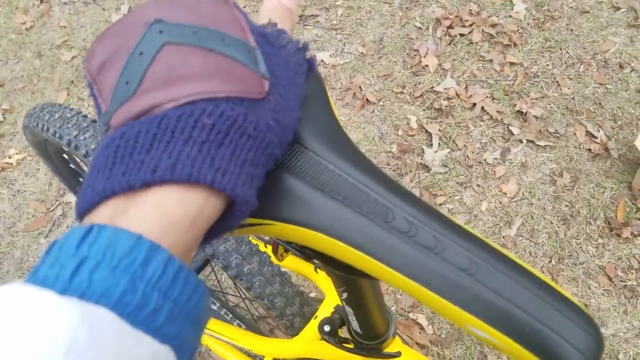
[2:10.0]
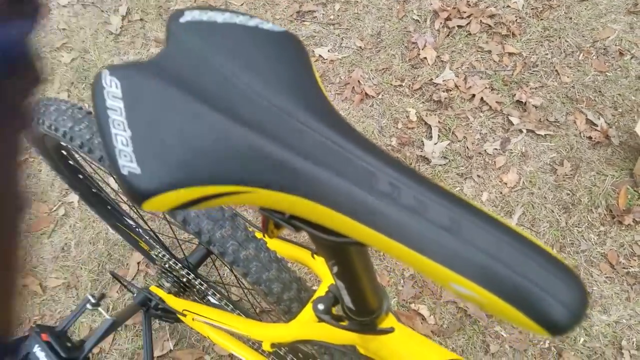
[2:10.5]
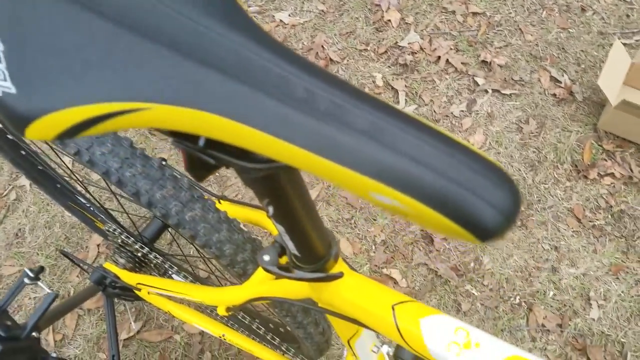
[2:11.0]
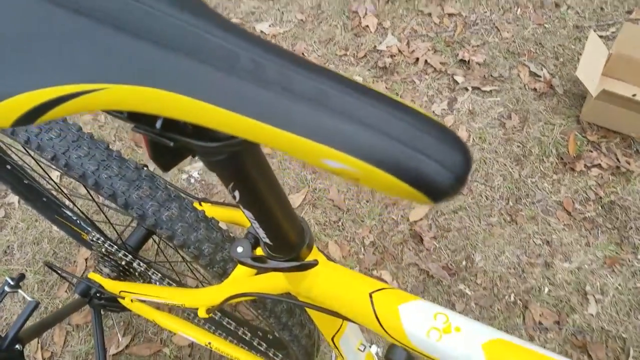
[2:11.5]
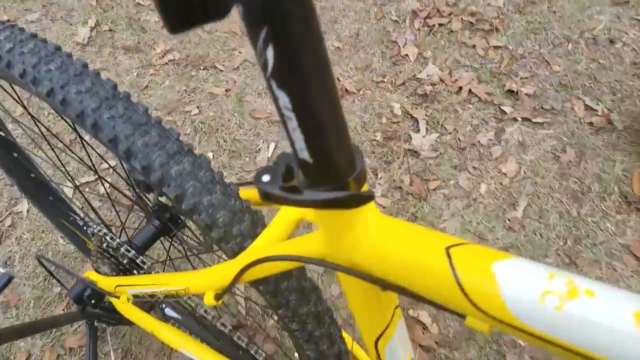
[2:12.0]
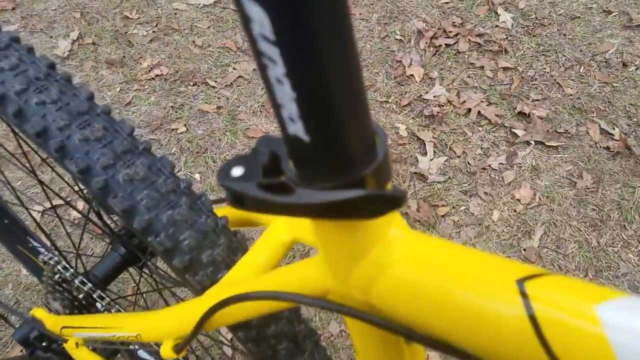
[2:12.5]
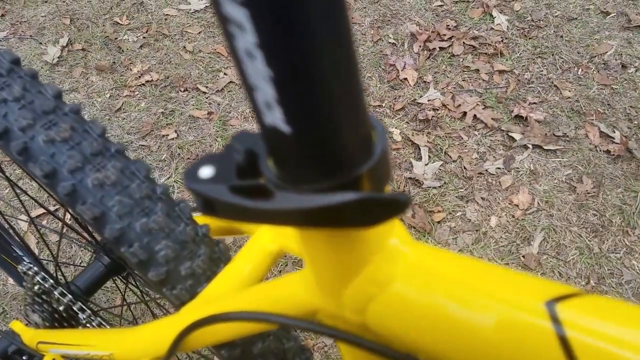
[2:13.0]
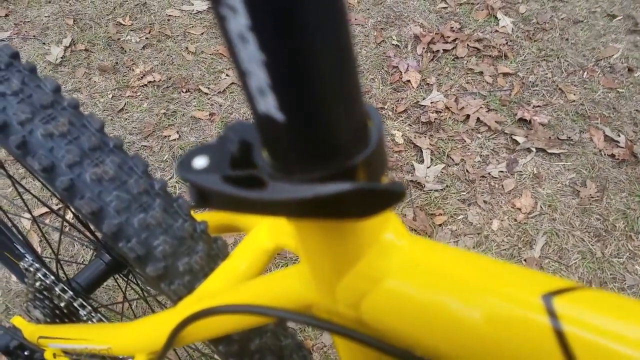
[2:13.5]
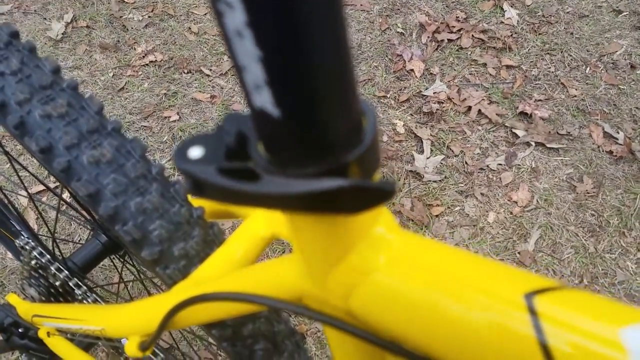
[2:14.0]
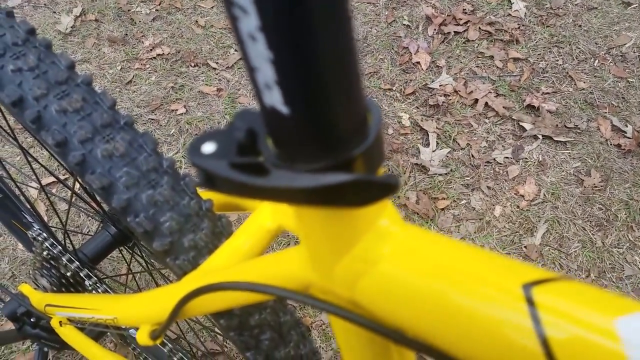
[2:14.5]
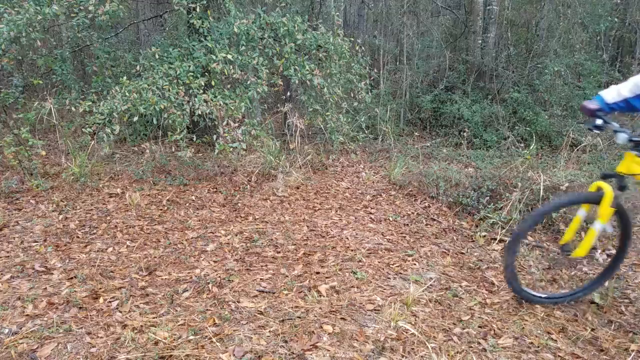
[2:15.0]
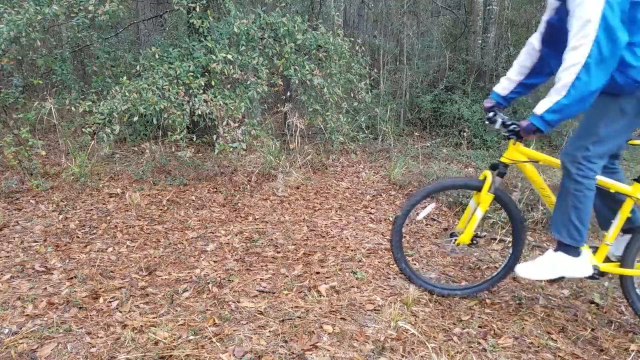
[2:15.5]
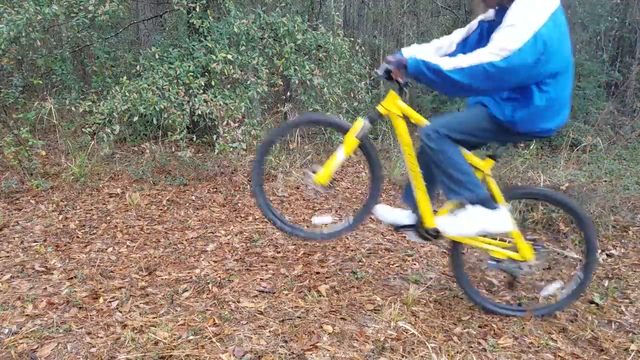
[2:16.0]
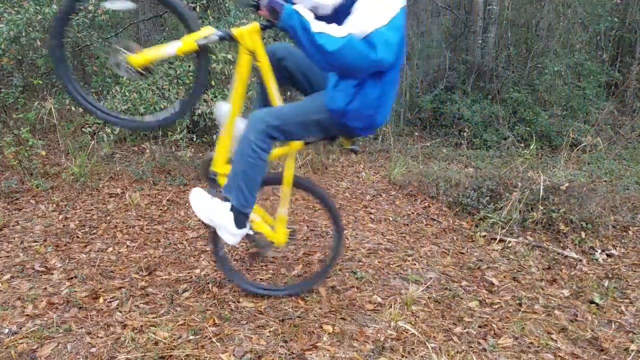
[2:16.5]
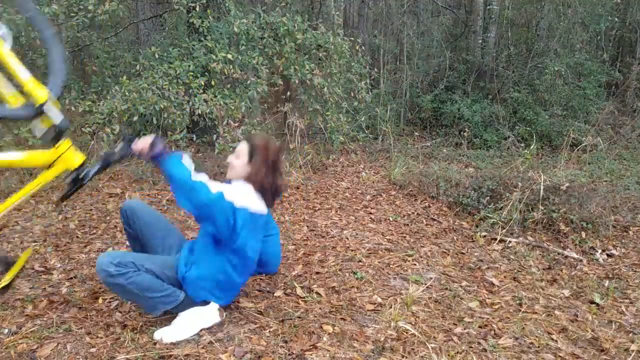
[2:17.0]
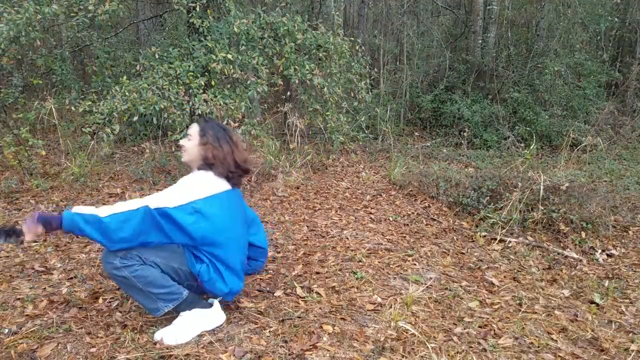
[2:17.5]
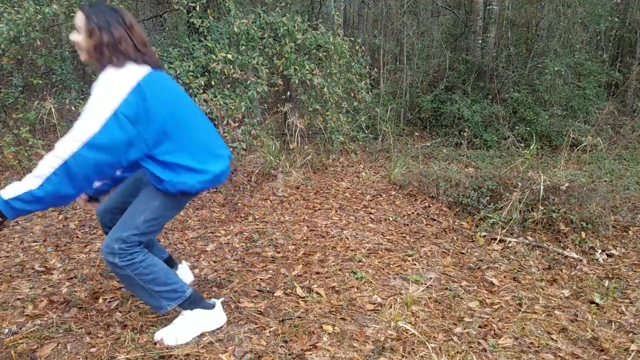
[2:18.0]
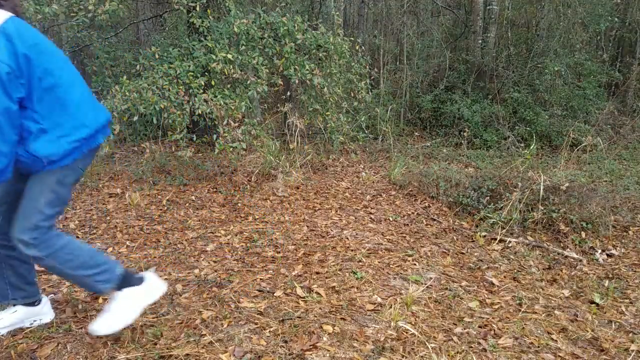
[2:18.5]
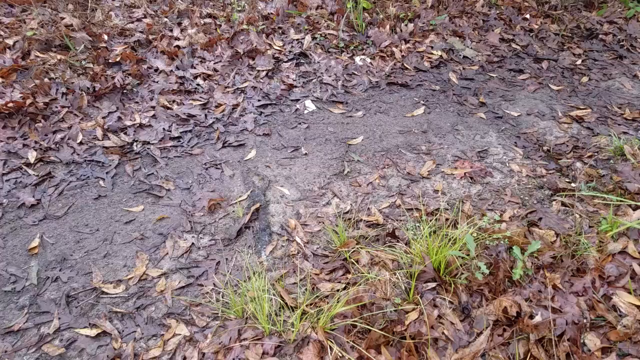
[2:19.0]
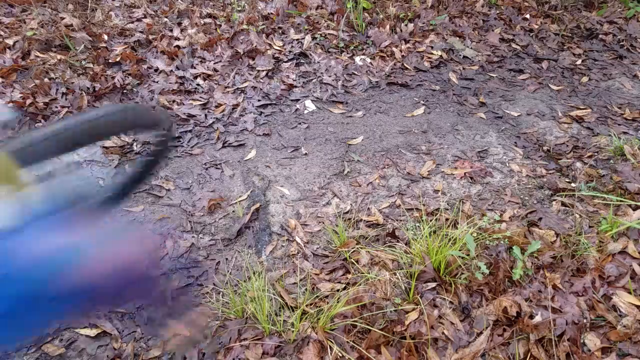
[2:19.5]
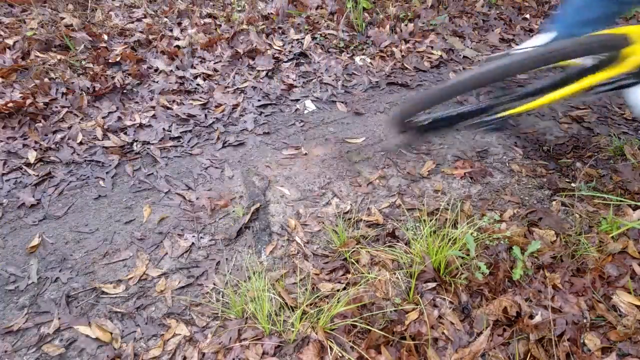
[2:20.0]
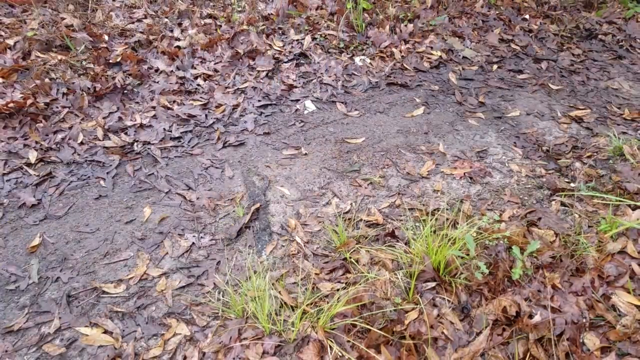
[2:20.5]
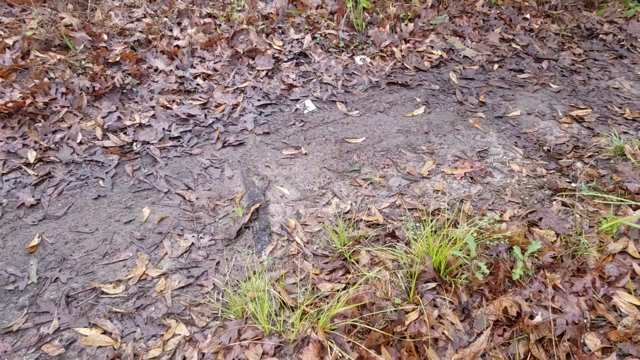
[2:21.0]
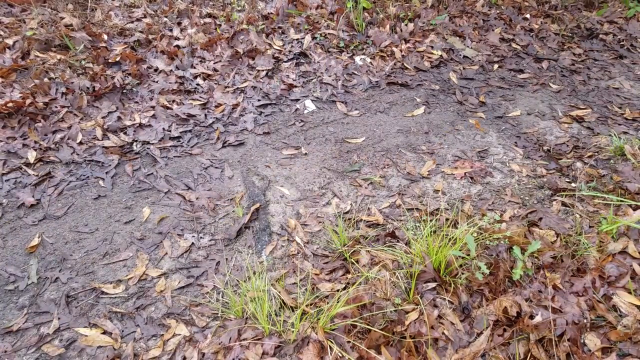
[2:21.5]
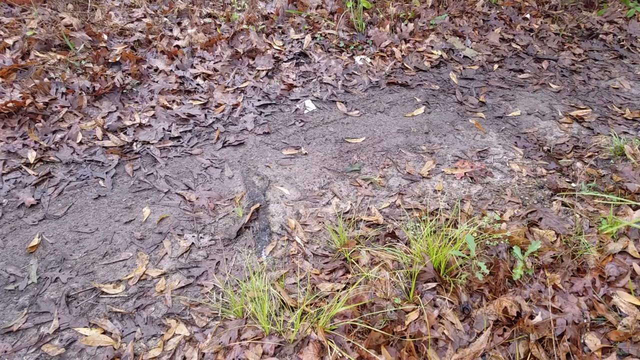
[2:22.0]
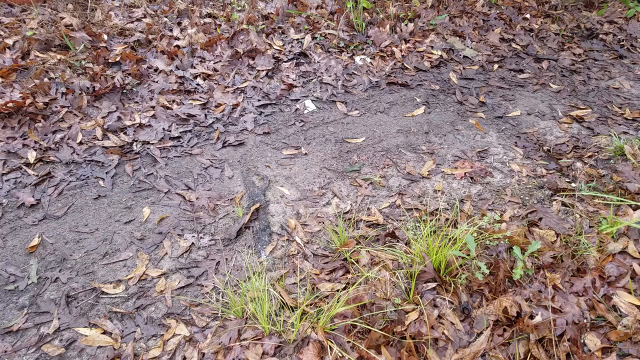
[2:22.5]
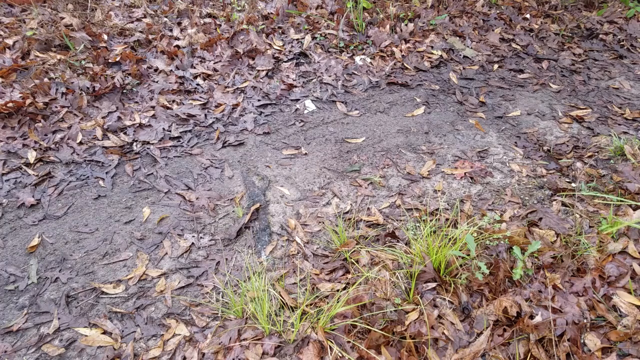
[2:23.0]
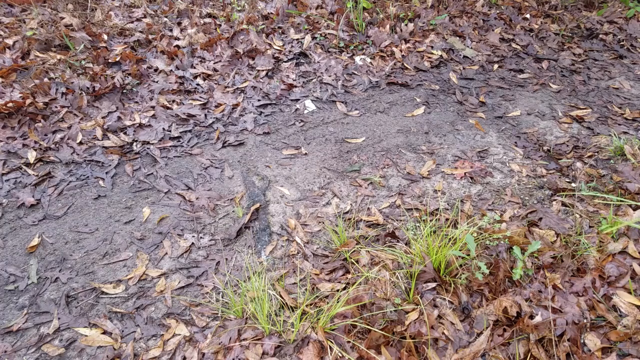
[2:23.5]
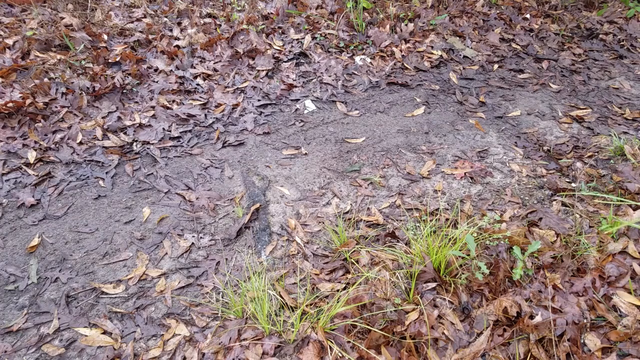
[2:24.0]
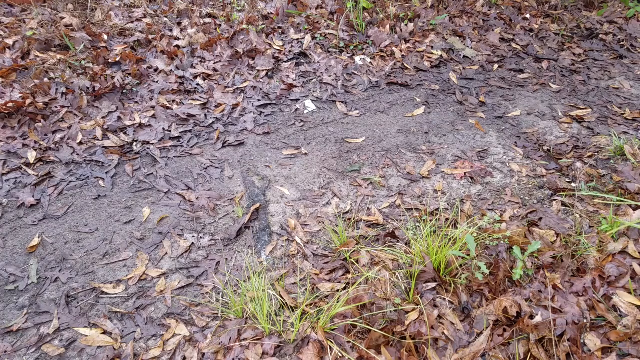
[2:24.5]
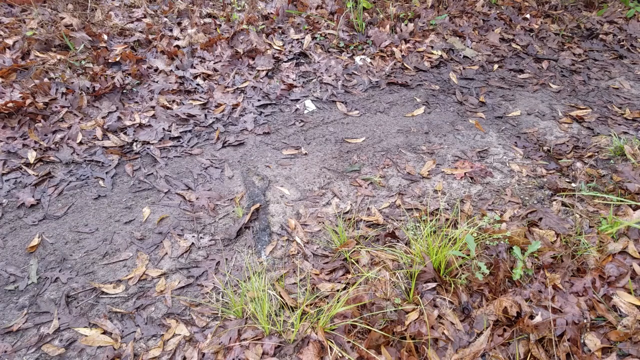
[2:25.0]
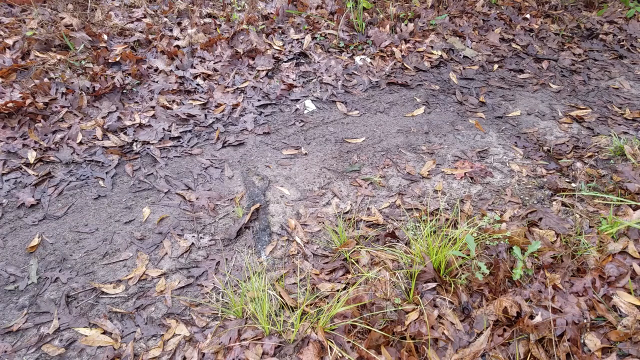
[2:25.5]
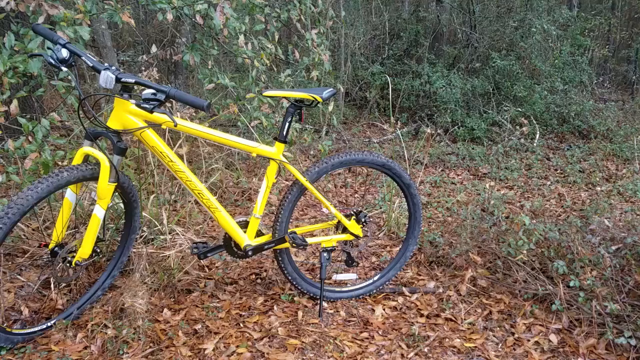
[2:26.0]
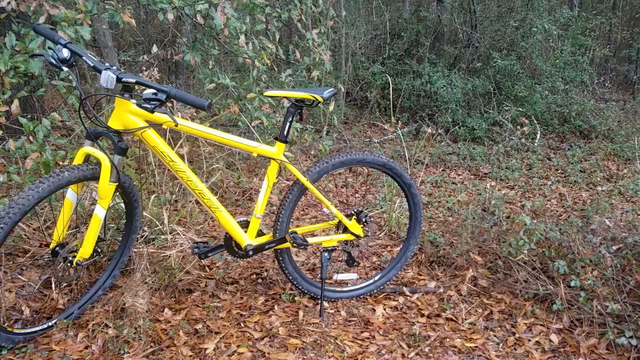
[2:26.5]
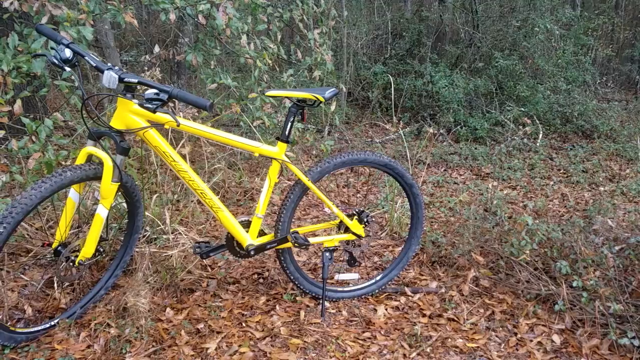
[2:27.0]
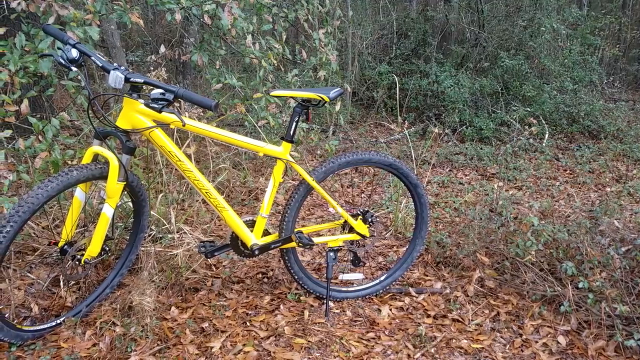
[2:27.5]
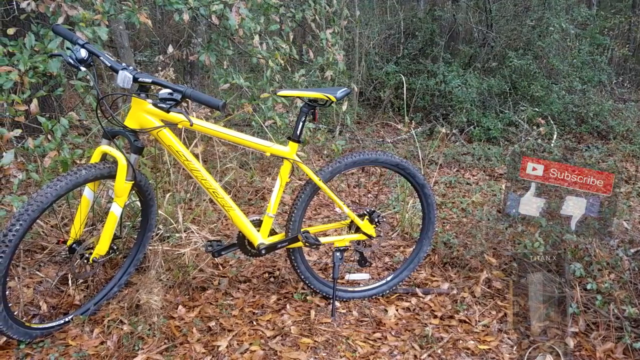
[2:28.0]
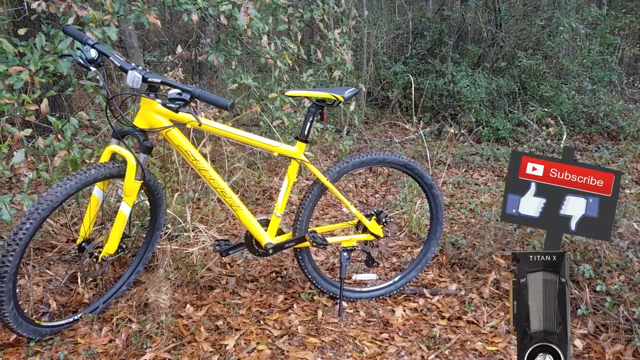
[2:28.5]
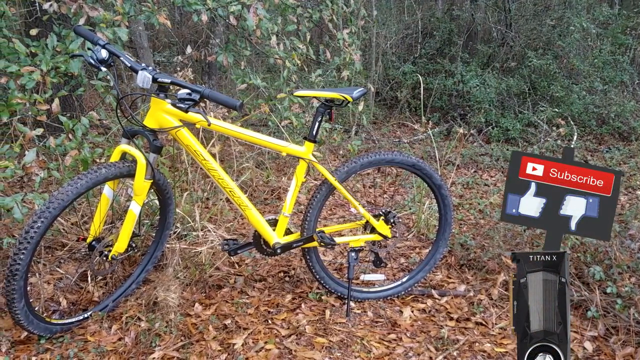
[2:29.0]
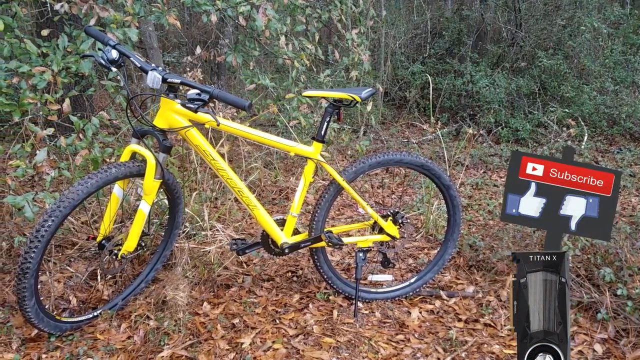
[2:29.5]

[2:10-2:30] The yellow bike has a black seat. A hand in a blue mitten, which has a rust-colored, cheap-looking vinyl rectangle on top with a chevron that appears to be black vinyl, holds onto the seat, then pulls away to show the seat's quick release. Then the rider appears: a girl who looks about 15 years old, with shoulder-length brown hair and a blue jacket. She pops something like a wheelie but falls backwards. After that, a subscribe button comes on. Oak leaves cover the ground, with the smallest amount of grass; it is mostly dirt.